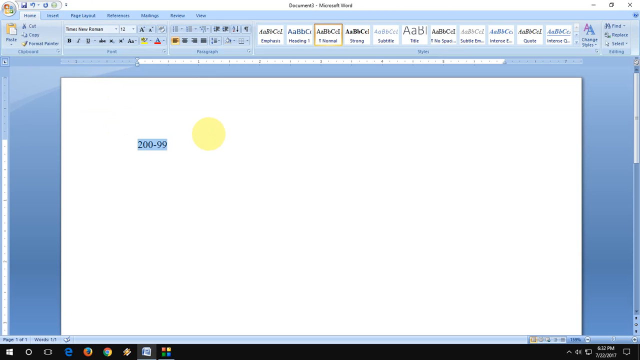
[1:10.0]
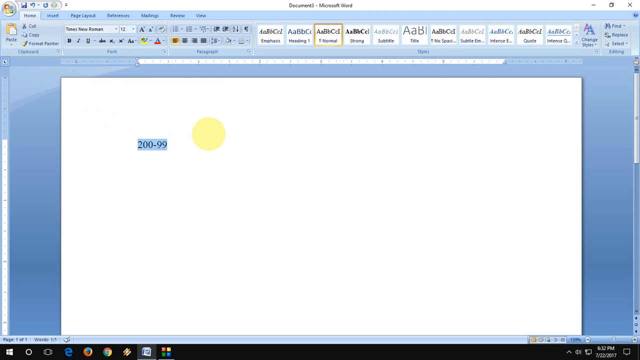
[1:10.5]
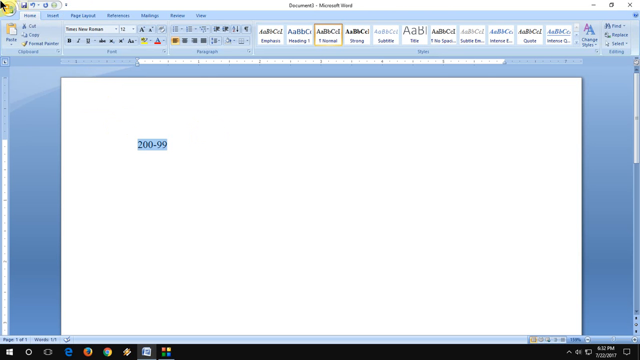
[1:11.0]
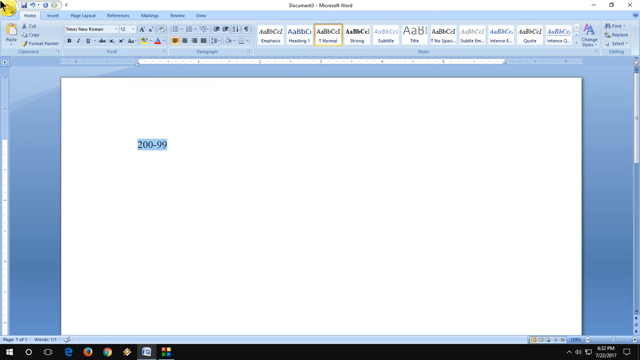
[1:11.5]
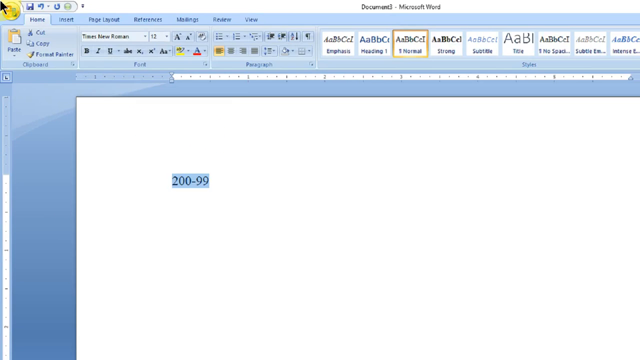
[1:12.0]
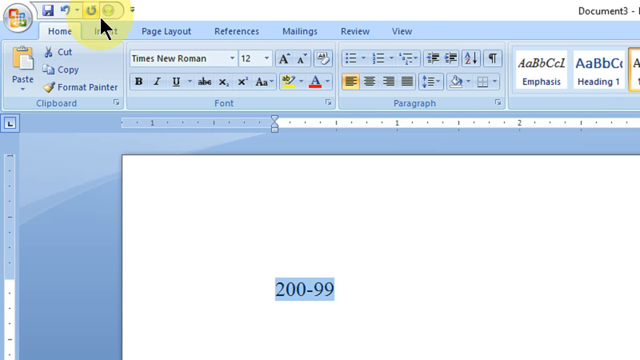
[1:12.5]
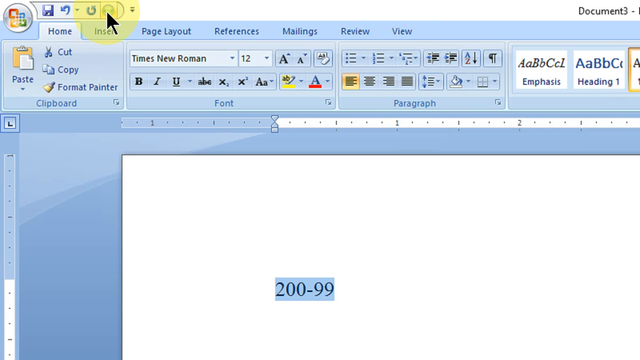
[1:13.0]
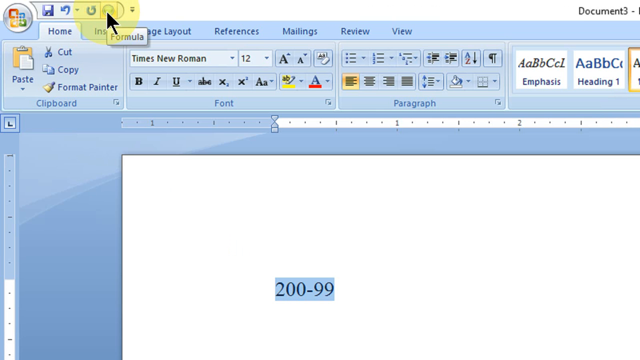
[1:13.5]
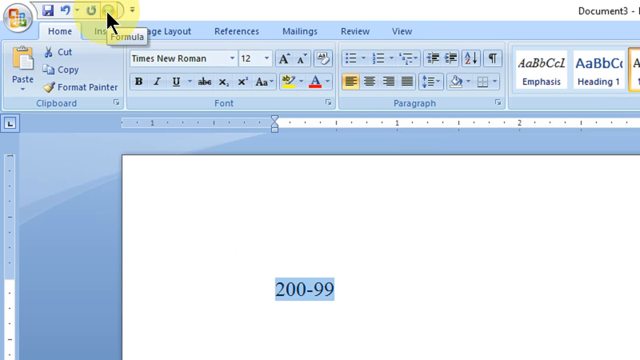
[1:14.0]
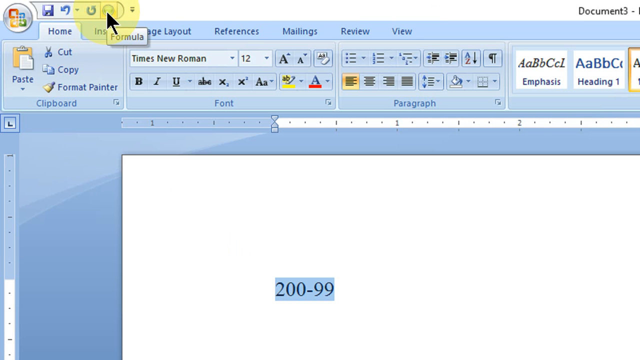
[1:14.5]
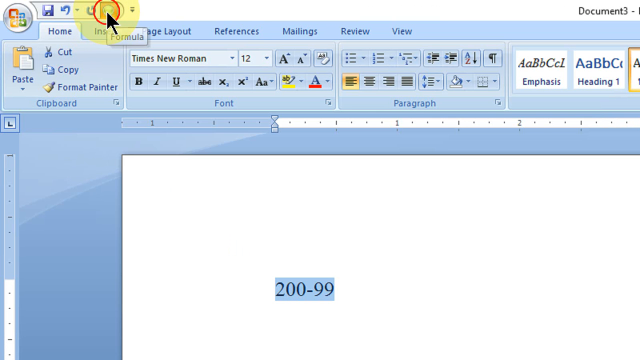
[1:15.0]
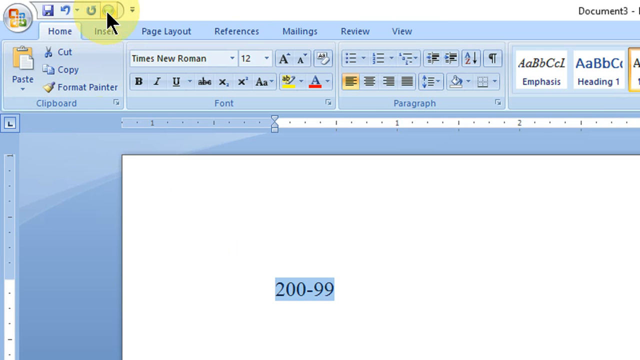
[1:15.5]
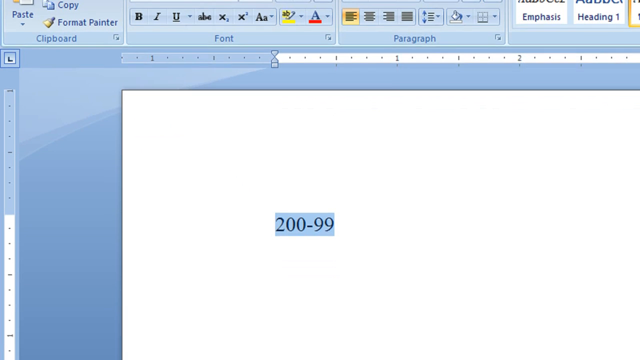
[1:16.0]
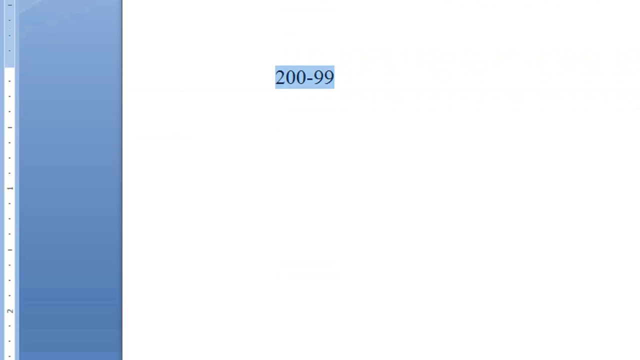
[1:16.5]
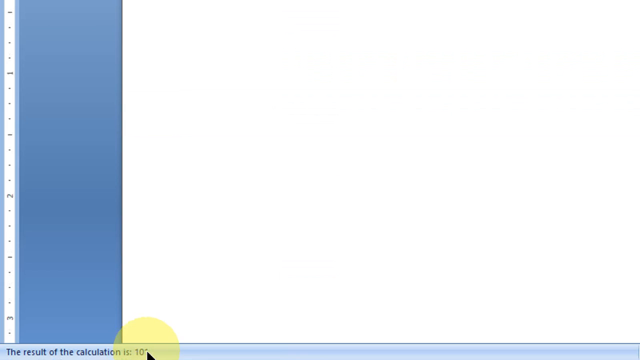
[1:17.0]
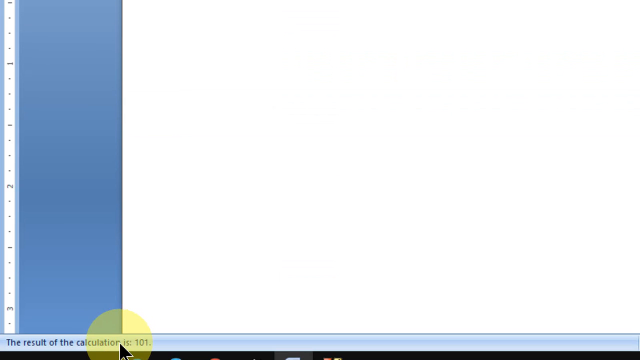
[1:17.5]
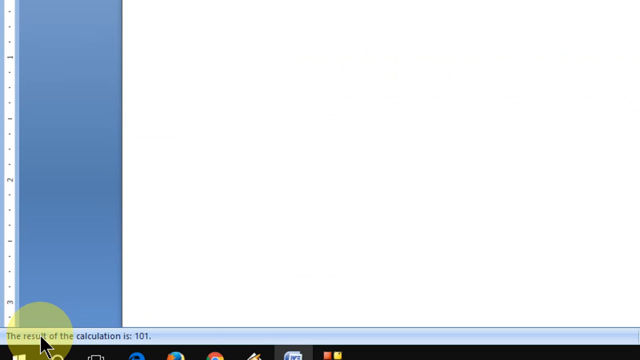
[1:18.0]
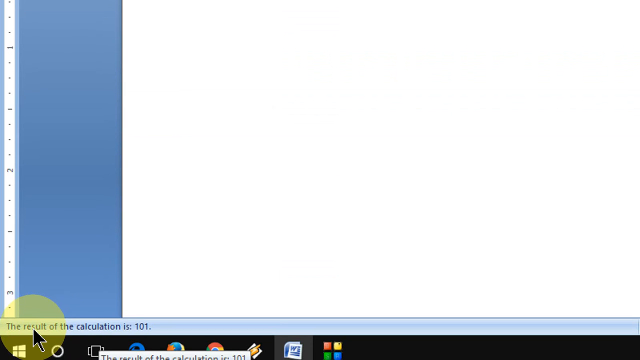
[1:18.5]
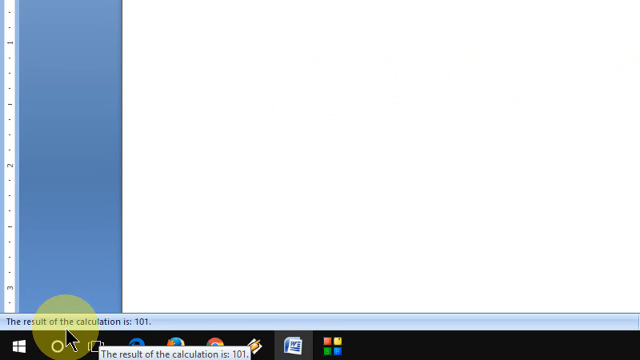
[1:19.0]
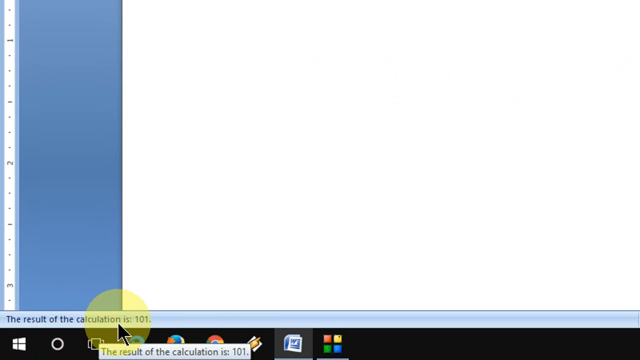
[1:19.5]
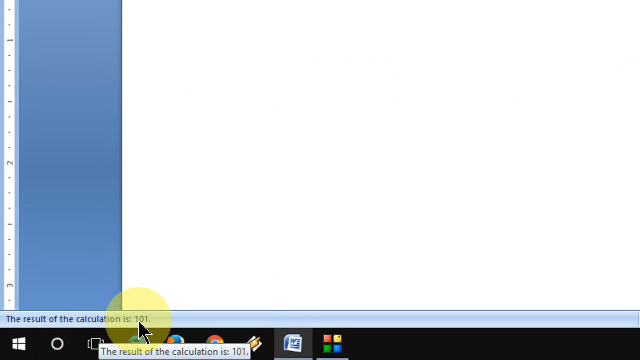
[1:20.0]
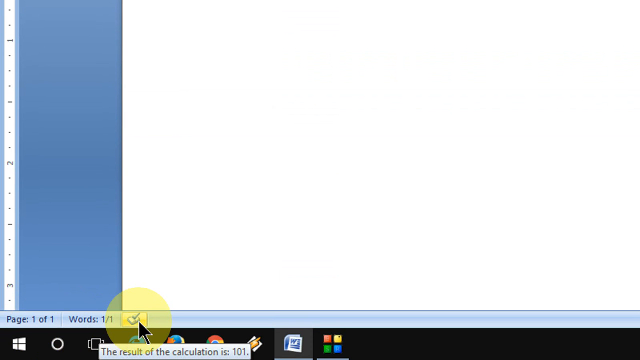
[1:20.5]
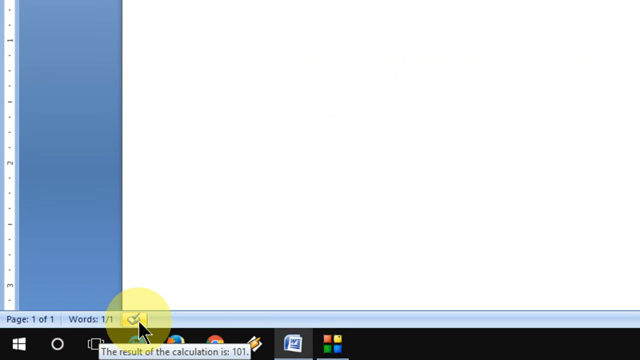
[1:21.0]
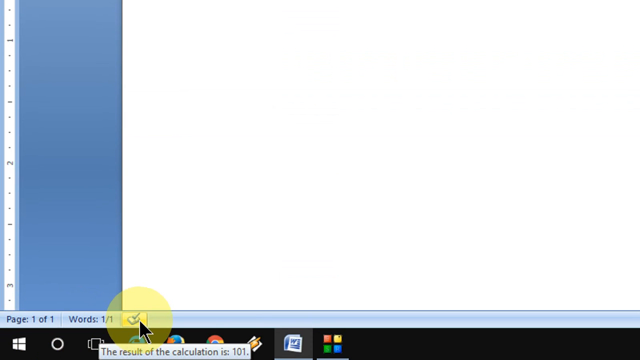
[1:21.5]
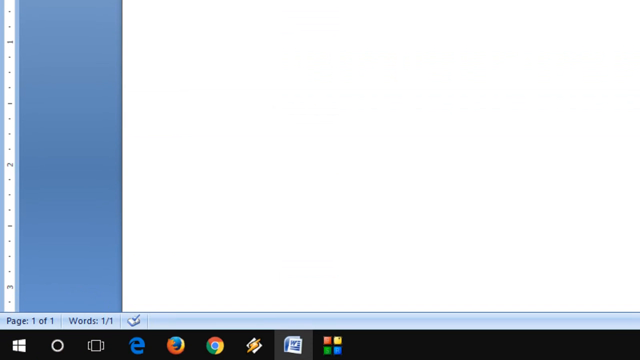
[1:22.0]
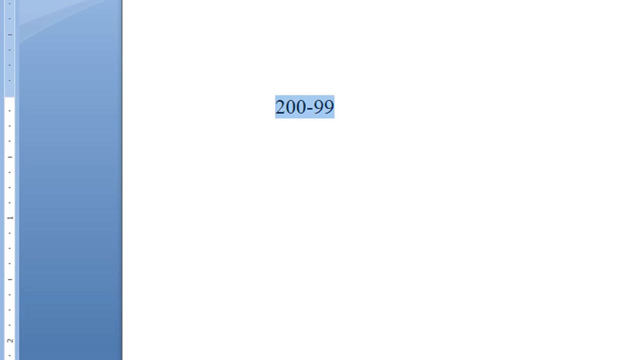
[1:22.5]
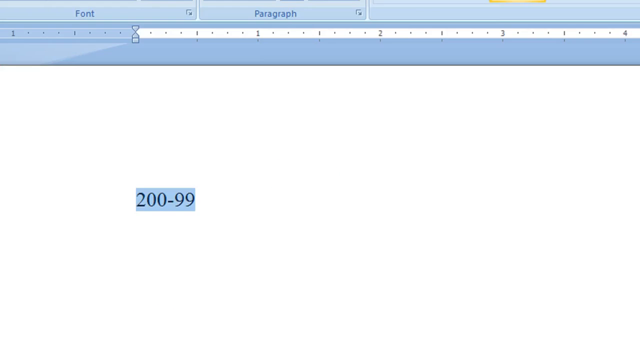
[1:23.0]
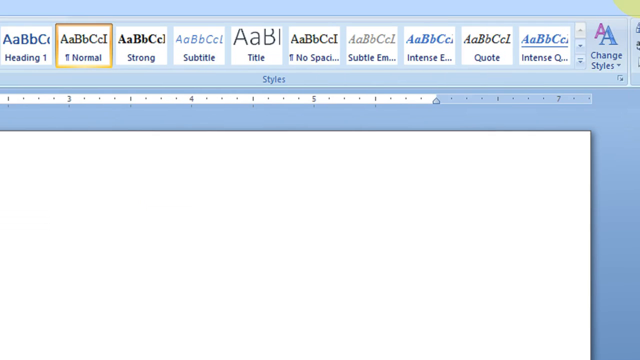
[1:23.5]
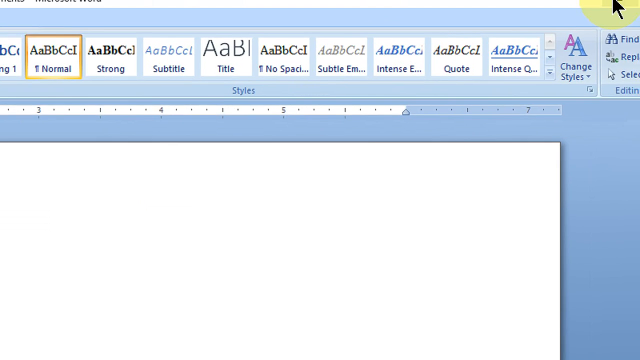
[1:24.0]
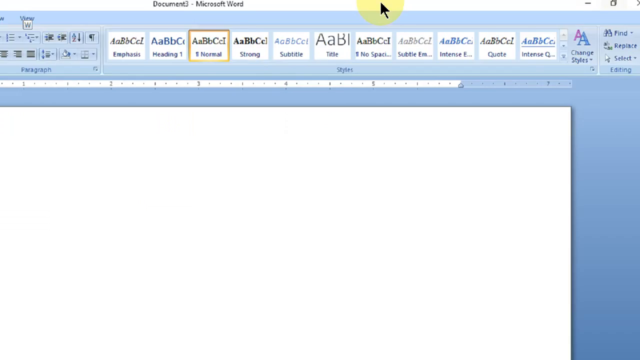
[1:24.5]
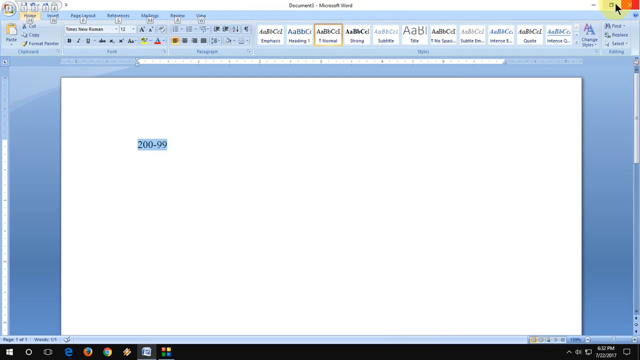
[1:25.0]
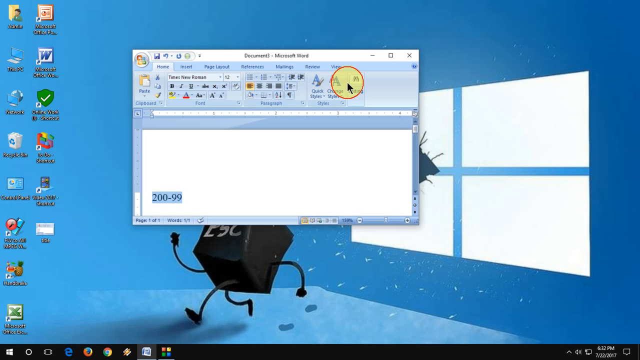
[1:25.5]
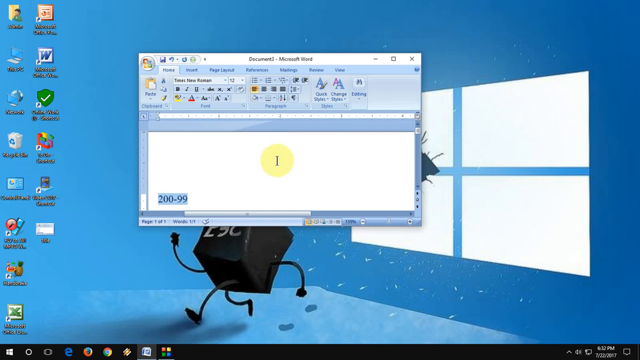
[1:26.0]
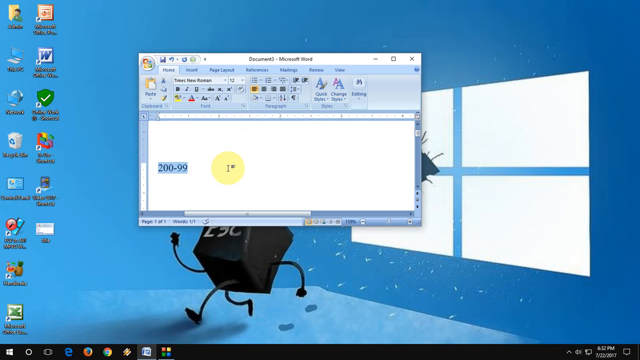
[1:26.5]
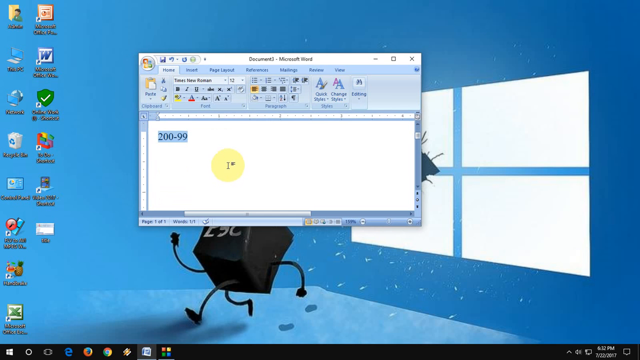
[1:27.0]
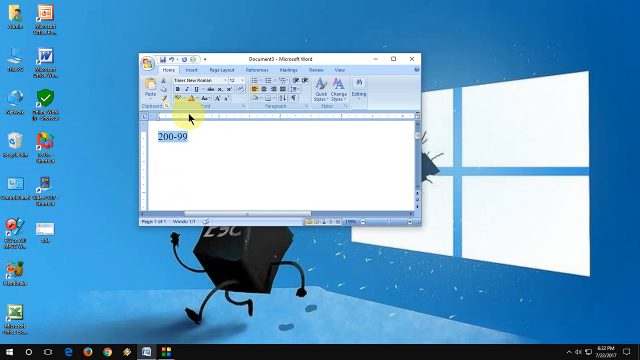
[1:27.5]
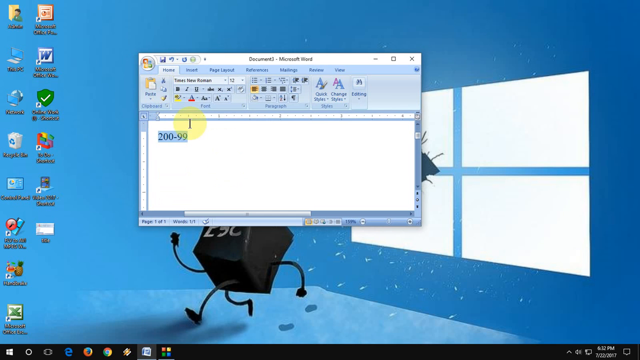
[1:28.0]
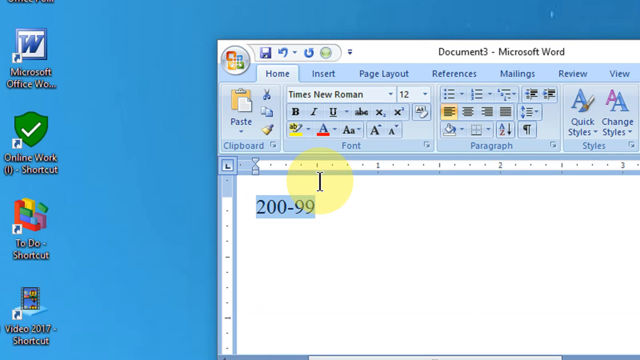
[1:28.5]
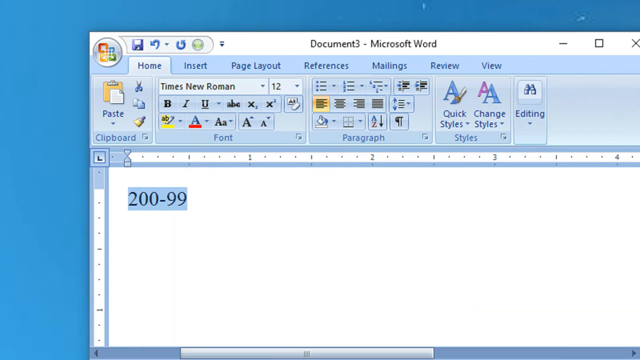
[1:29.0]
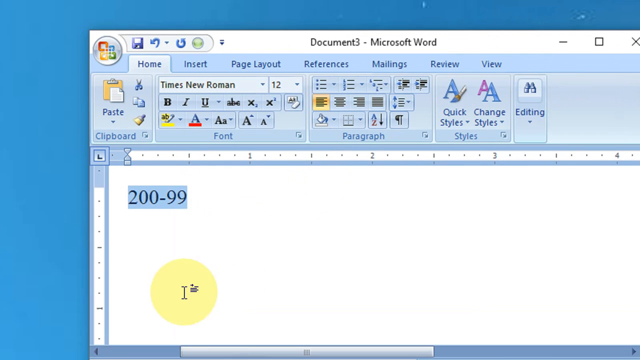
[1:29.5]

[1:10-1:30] With the text 200-99 highlighted, the user moves to the top left of the screen and clicks the formula icon, and the red sphere indicator appears to show the click. The user then moves to the bottom left of the page and clicks the icon next to the word heading; the icon has a tick and a paper on it. Next the user moves to the top right of the screen and clicks the minimise icon, shown as a solid horizontal line, and the Microsoft Word document resizes to a window. The user scrolls the page down slightly so that the numbers of the text are displayed at the top left of the window, and the screen zooms in on this text.